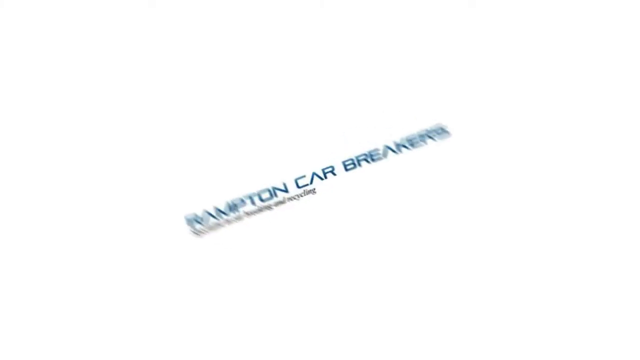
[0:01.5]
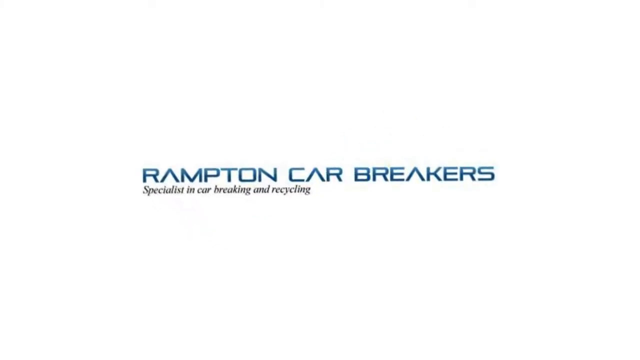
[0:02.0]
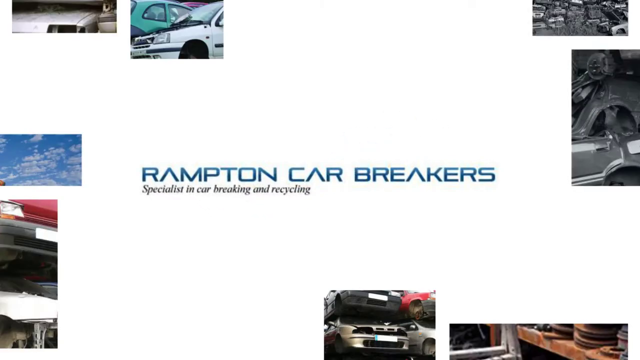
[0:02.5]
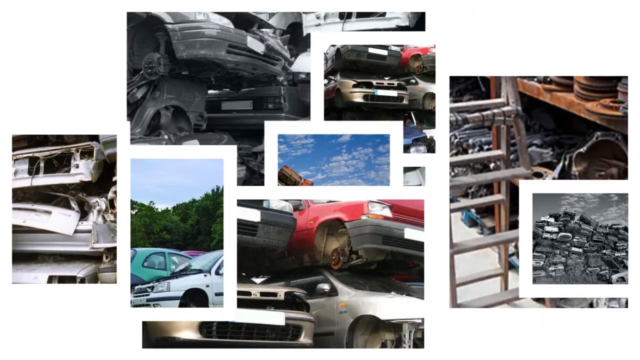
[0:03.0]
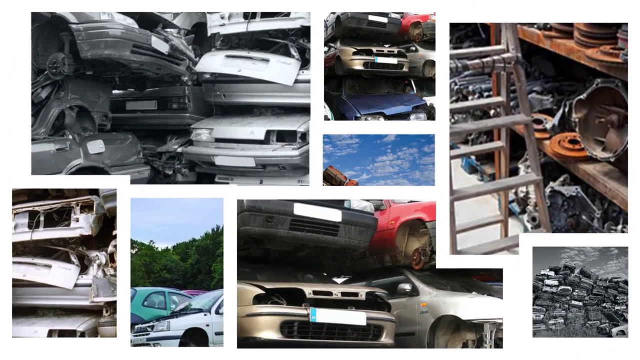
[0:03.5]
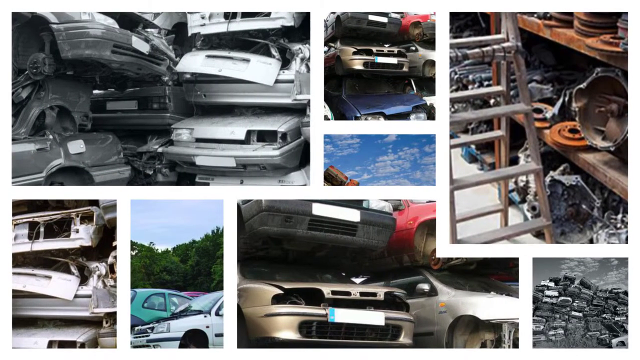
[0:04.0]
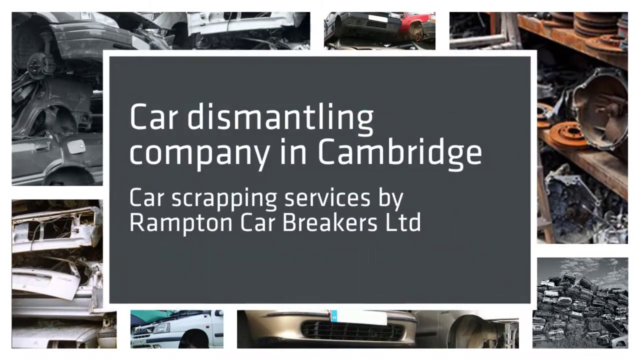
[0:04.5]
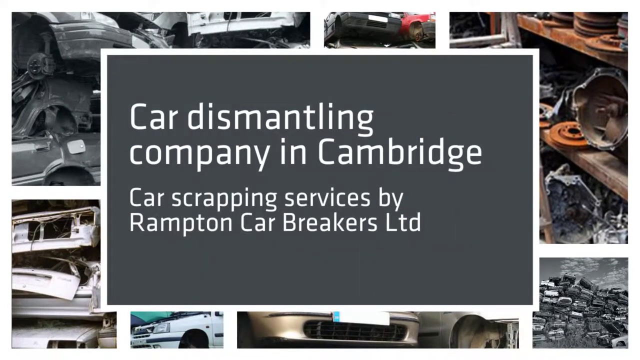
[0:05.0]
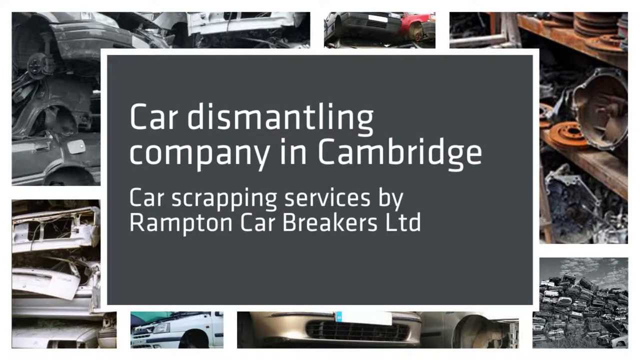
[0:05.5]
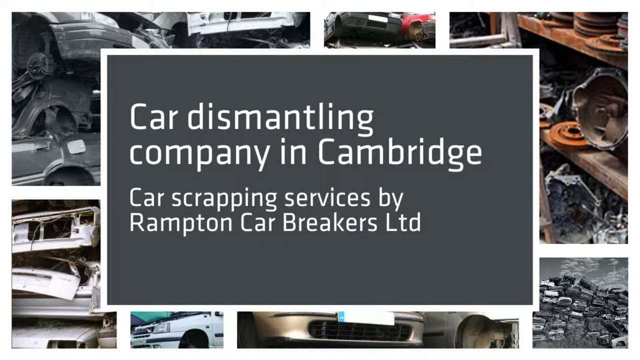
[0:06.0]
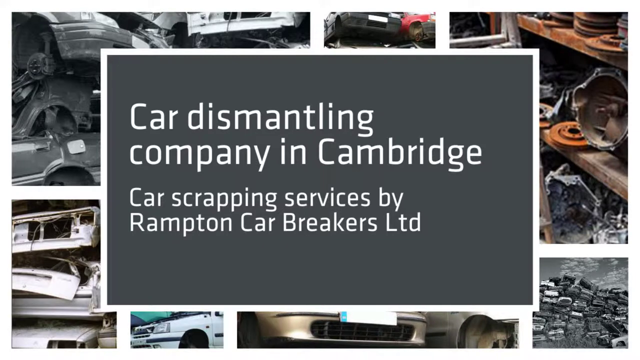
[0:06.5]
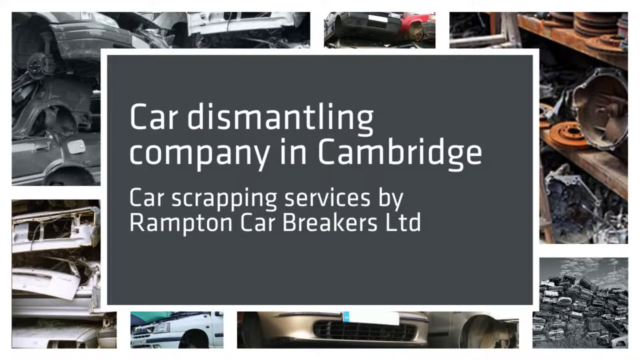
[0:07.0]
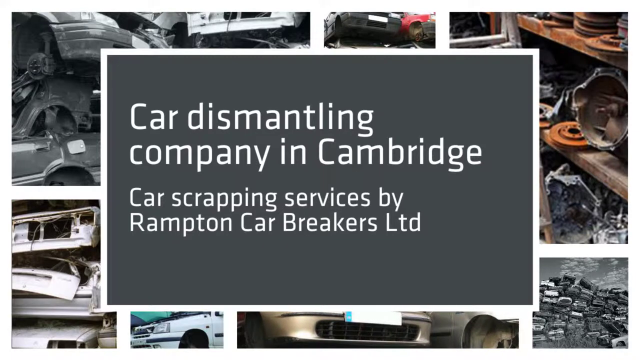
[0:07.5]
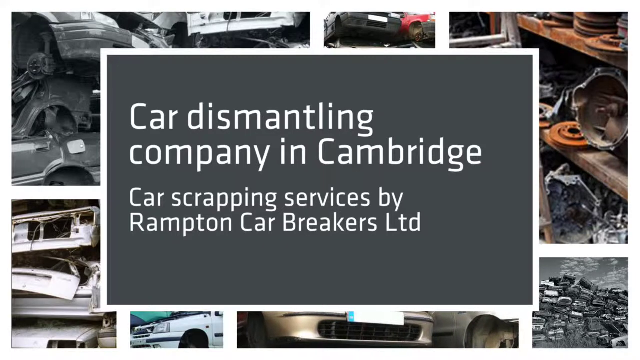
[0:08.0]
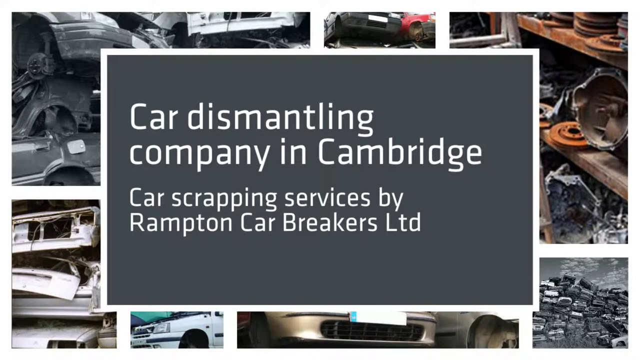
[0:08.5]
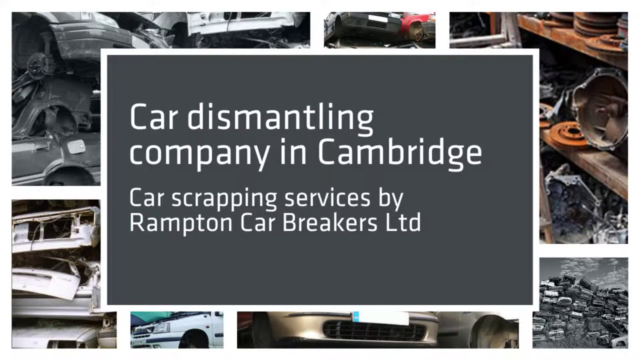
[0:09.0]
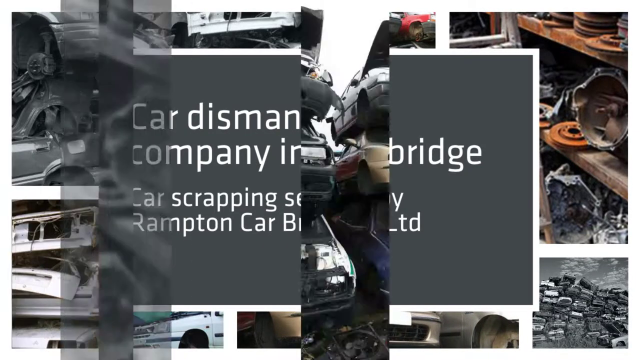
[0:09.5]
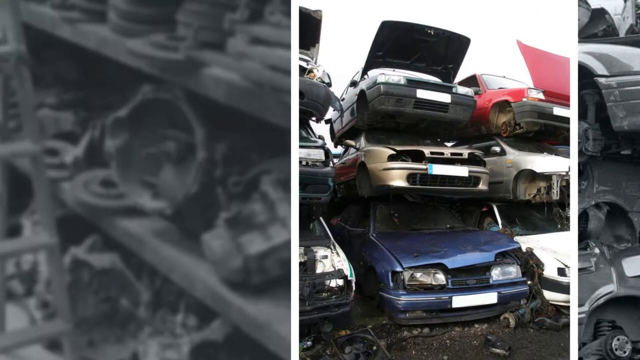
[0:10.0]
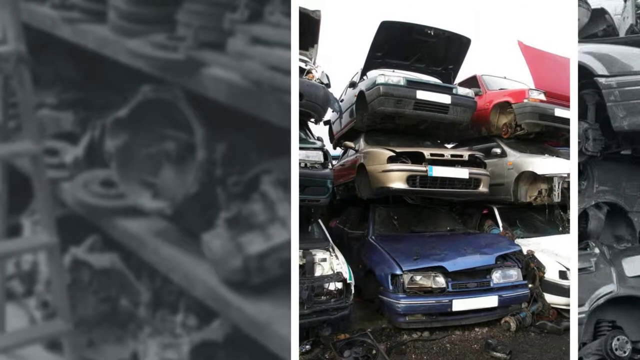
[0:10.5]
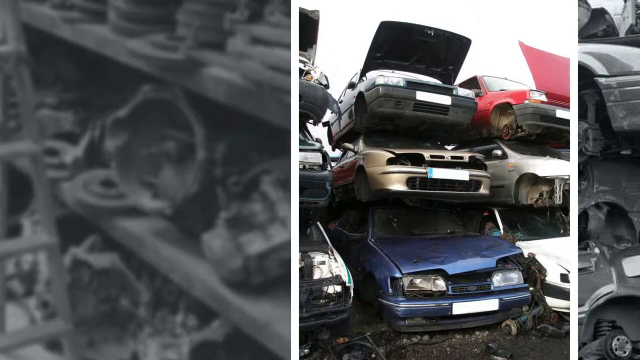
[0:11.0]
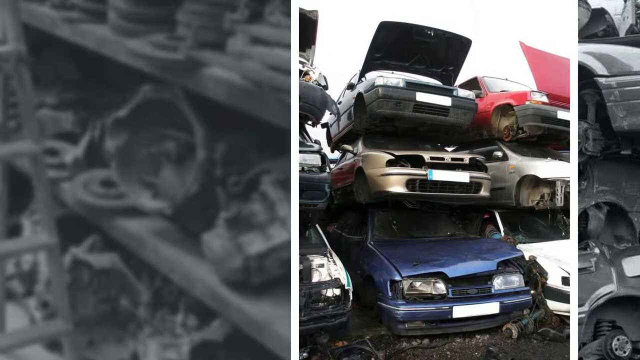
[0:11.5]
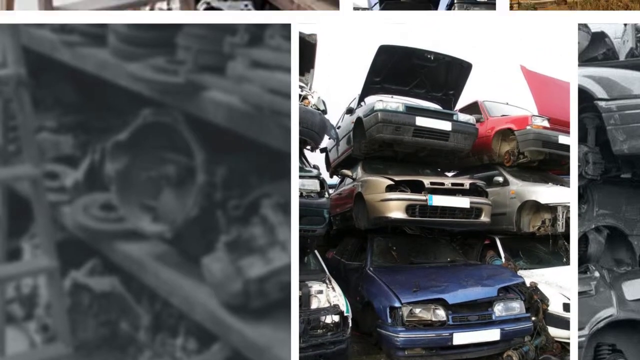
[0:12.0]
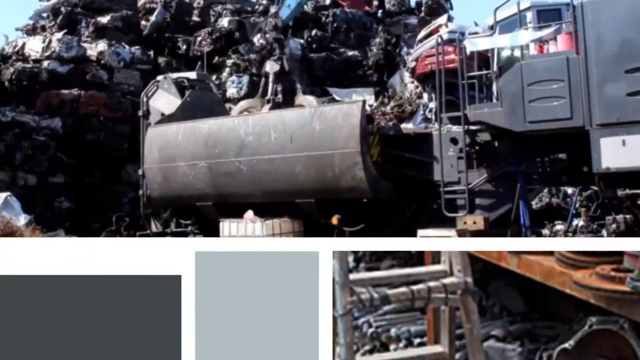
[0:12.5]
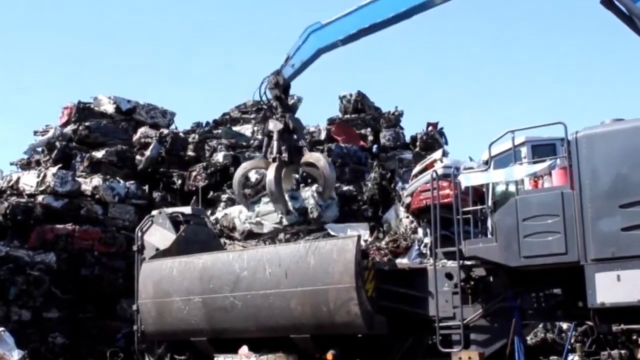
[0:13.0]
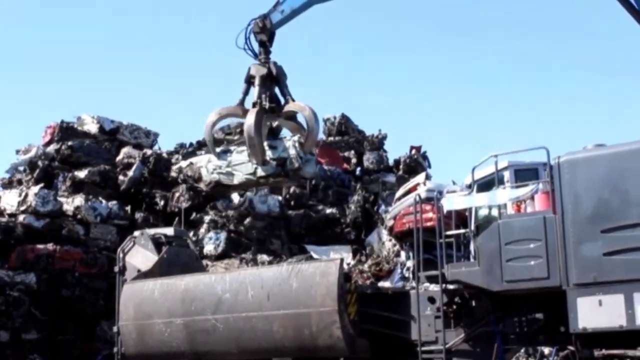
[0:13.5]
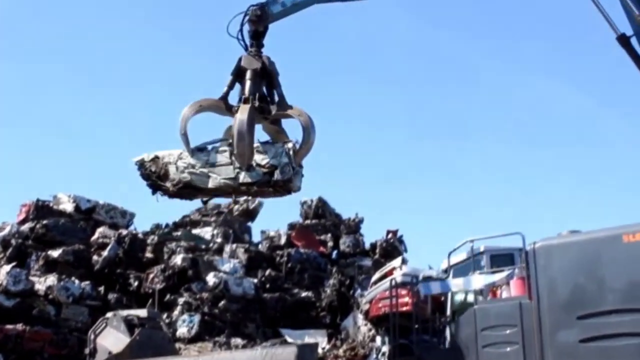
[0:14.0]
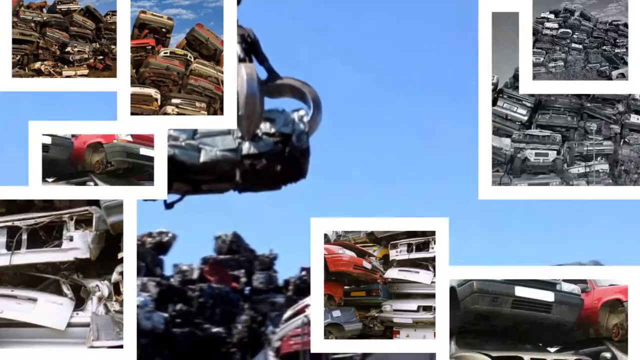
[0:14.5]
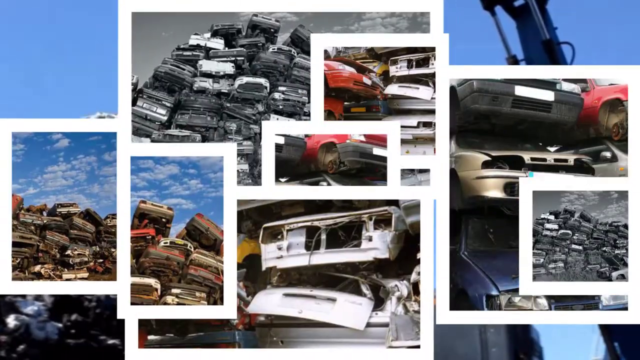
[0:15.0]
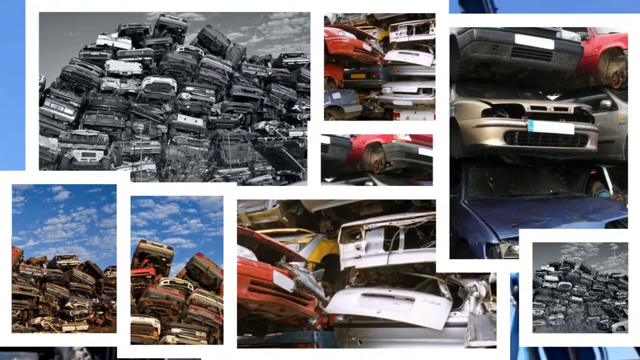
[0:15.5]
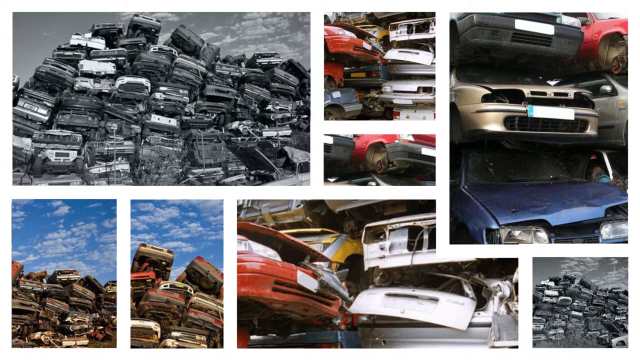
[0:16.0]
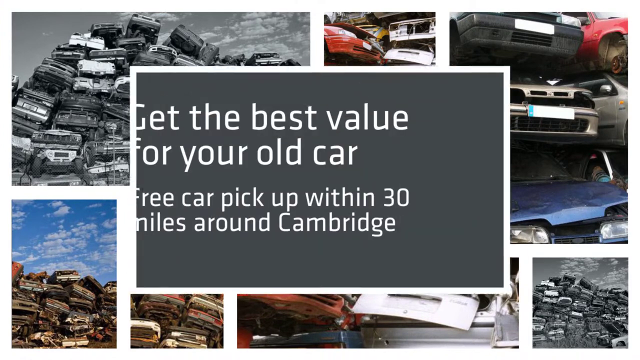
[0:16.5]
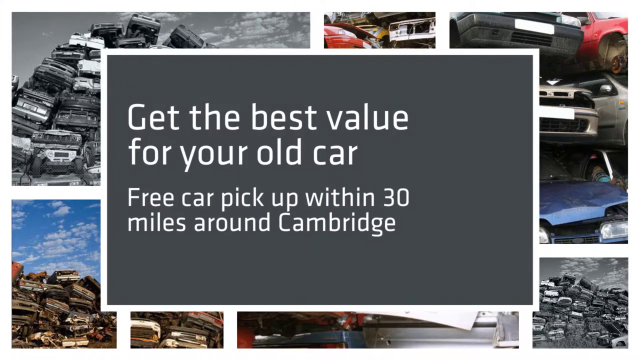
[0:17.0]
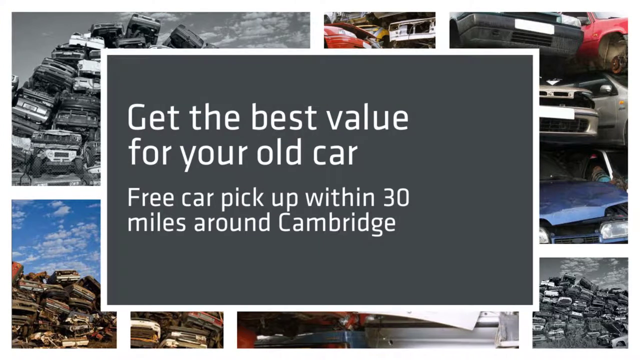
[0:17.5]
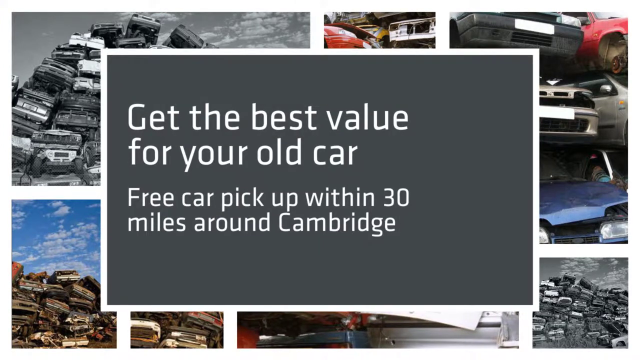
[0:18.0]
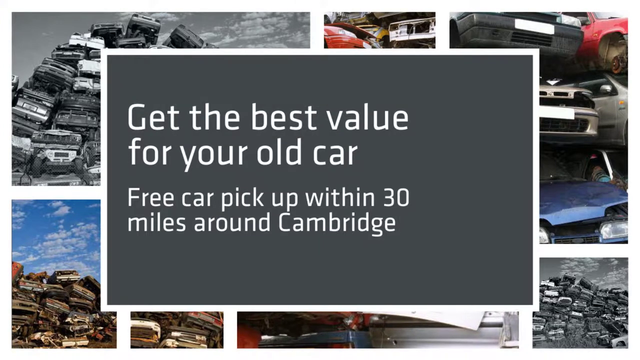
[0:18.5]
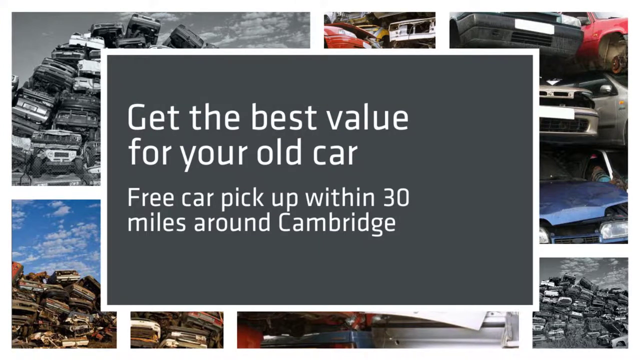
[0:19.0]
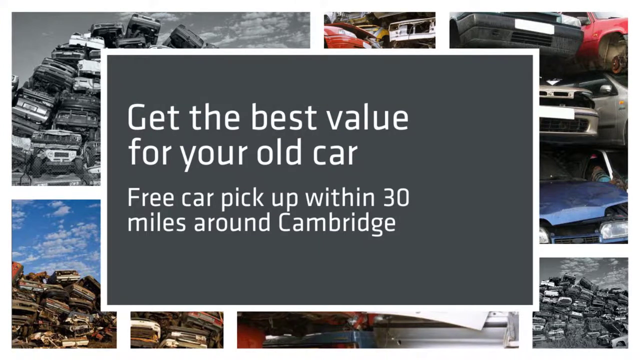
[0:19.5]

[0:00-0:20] The video opens with Rampton Car Breakers, specialist in car breaking and recycling, and shows multiple pictures of cars being fixed or dismantled. Text reads "Car dismantling company in Cambridge," and underneath it says "Car scrapping services by Rampton Car Breakers Ltd." Several video shots follow of a crane picking up car parts, with piles of cars in the background. Text then reads "Get the best value for your old car. Free car pickup within 30 miles around Cambridge." The background looks almost like a junkyard, with many cars stacked in piles; many of them are missing their tires, and some are piled on top of each other. The crane picks up smashed auto parts, and even a full car that has been compressed and compacted for dismantling.